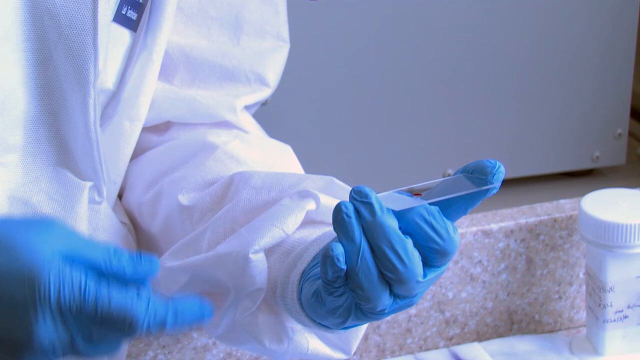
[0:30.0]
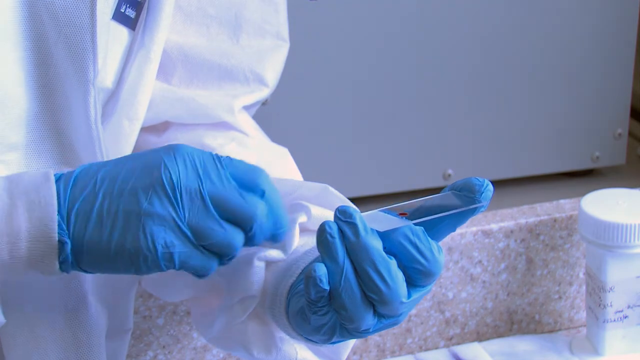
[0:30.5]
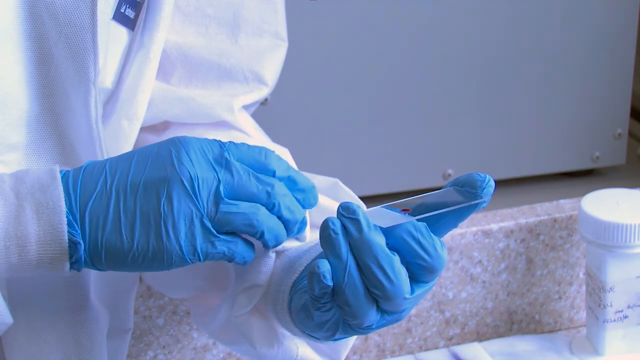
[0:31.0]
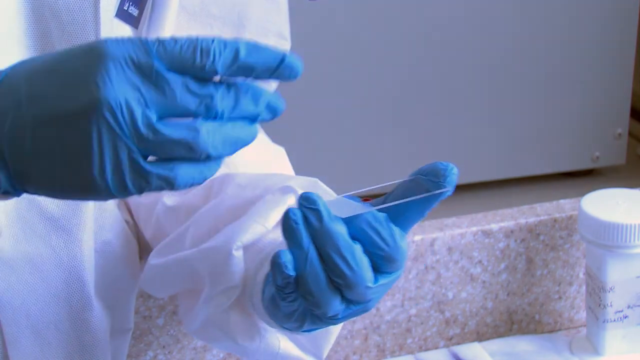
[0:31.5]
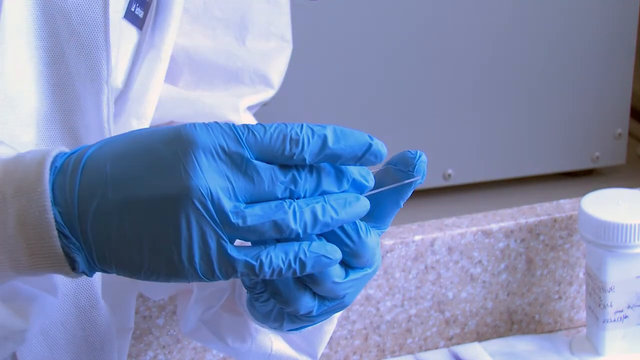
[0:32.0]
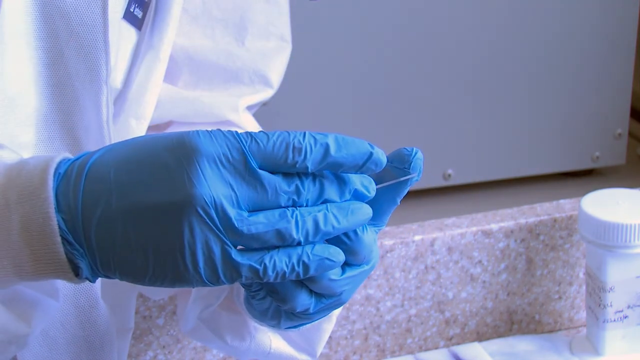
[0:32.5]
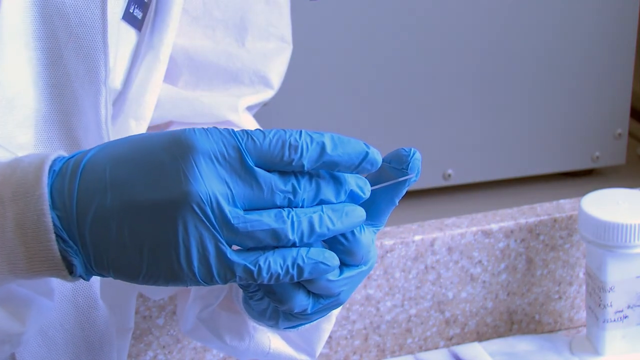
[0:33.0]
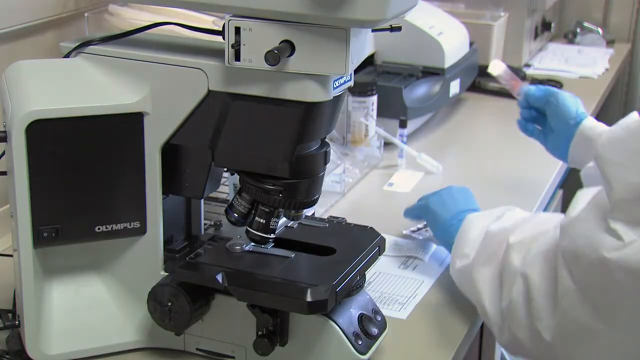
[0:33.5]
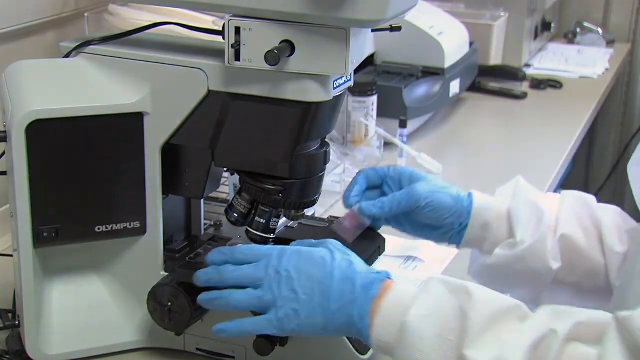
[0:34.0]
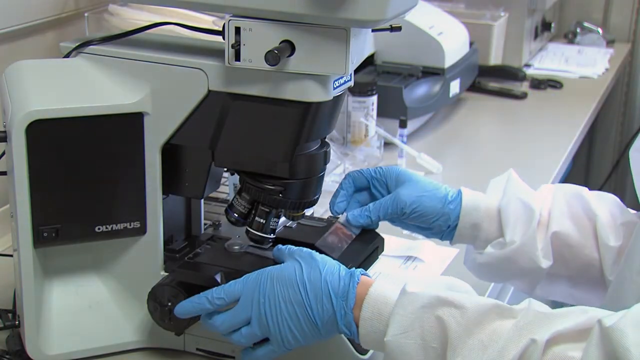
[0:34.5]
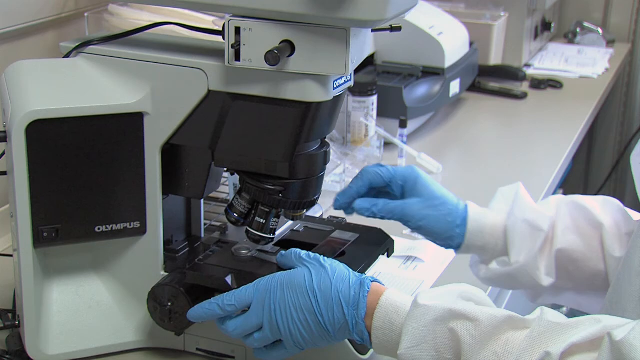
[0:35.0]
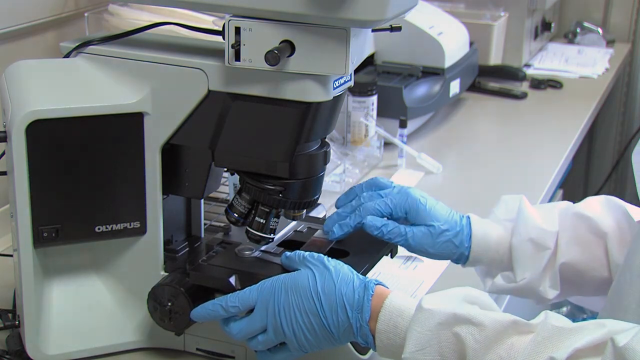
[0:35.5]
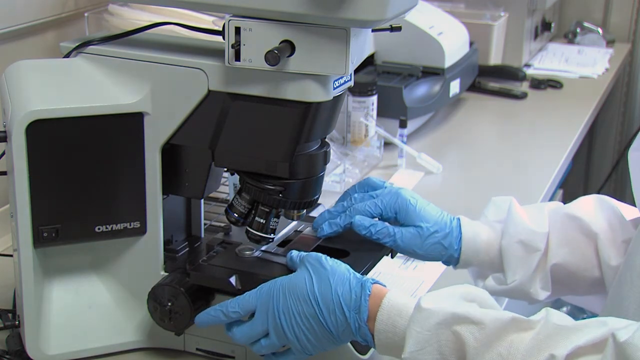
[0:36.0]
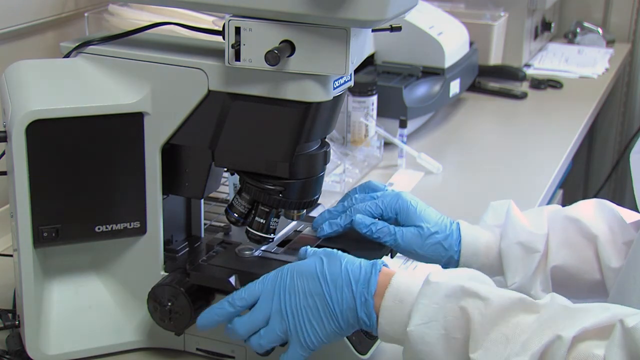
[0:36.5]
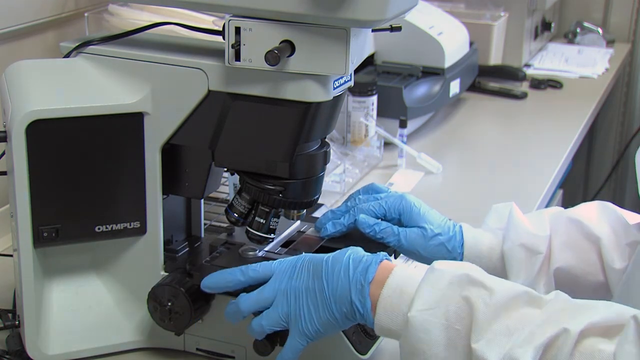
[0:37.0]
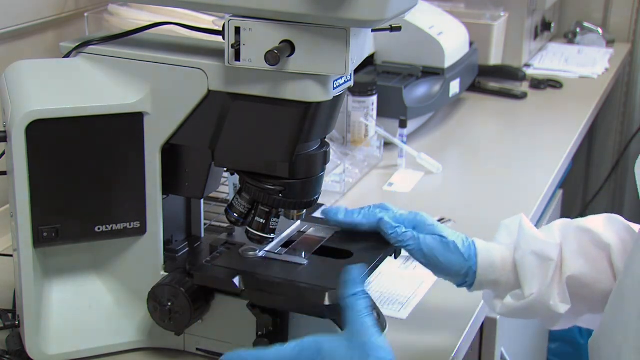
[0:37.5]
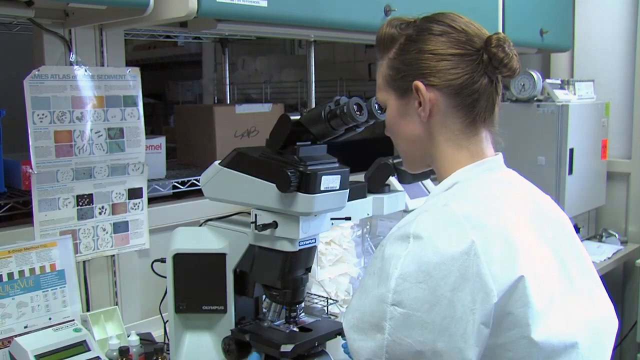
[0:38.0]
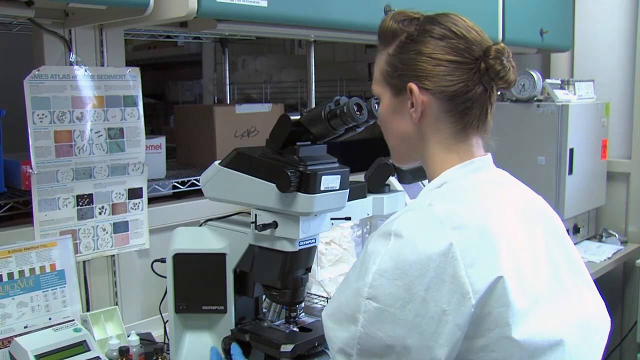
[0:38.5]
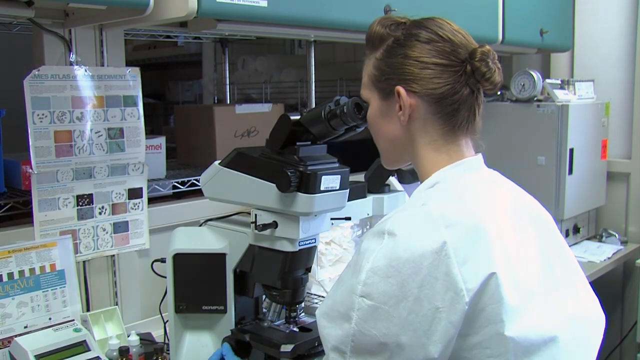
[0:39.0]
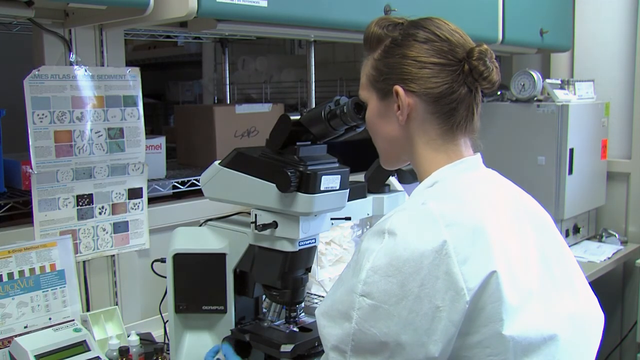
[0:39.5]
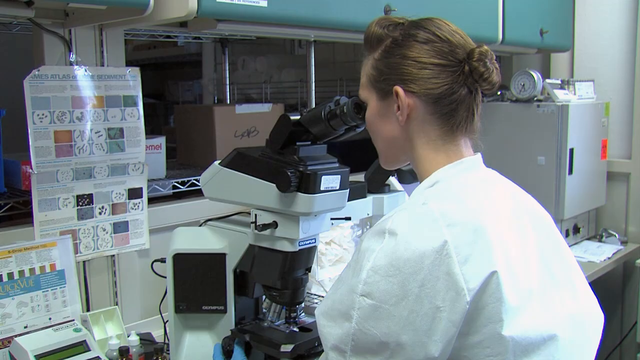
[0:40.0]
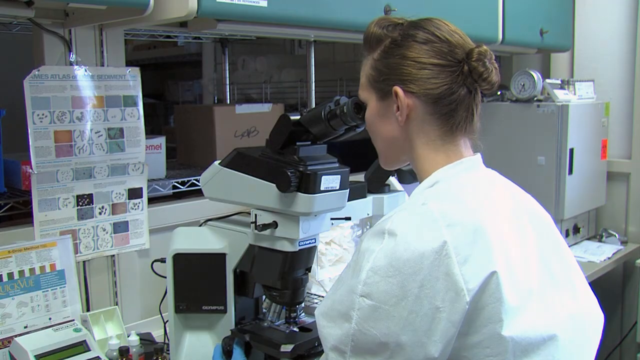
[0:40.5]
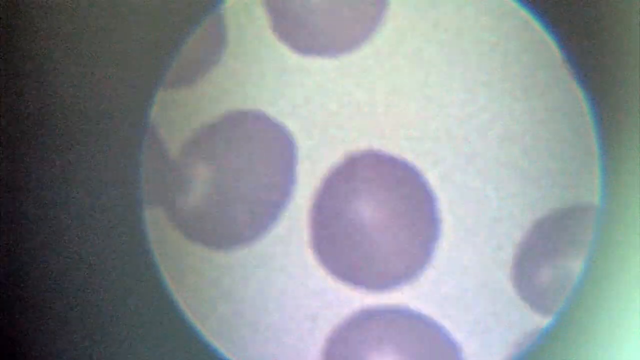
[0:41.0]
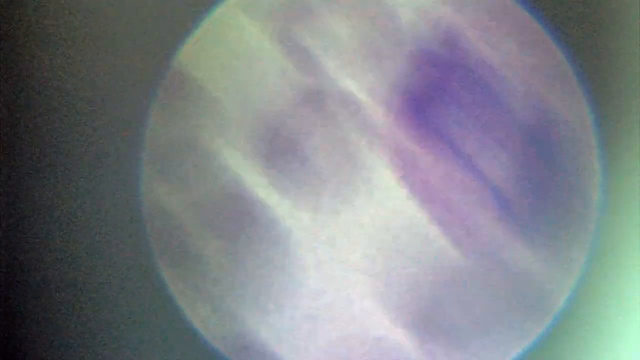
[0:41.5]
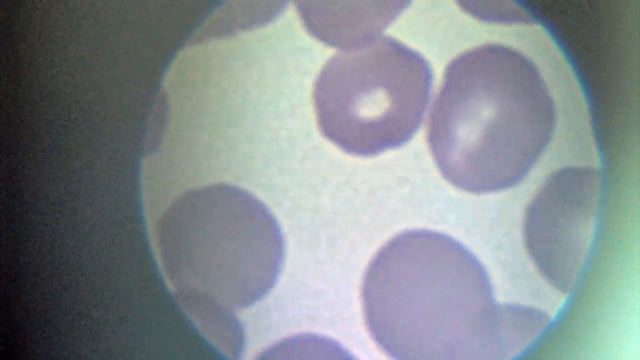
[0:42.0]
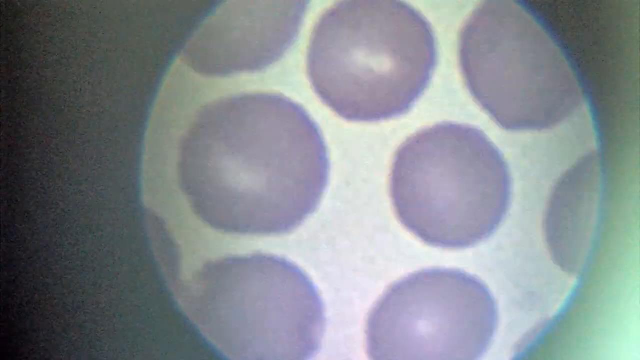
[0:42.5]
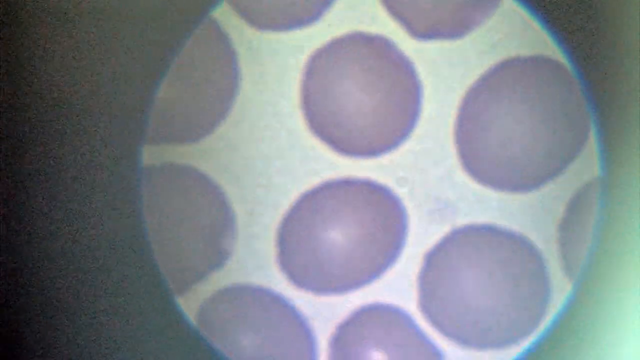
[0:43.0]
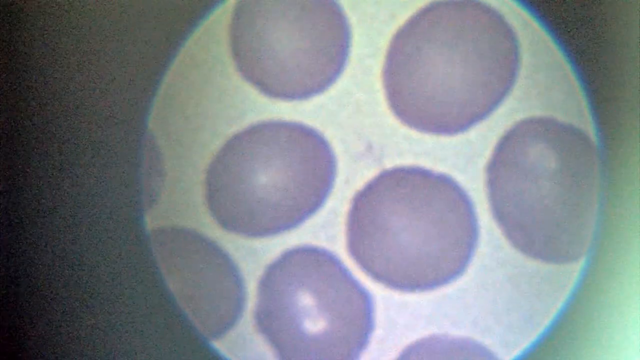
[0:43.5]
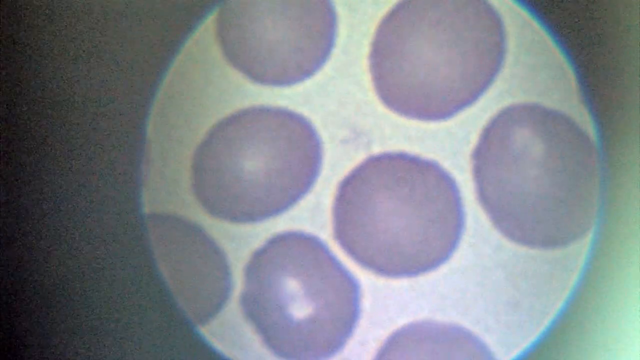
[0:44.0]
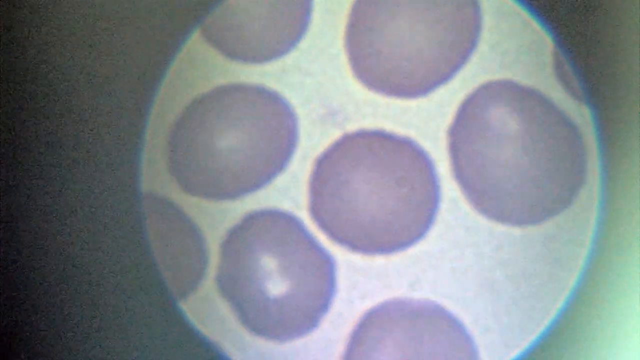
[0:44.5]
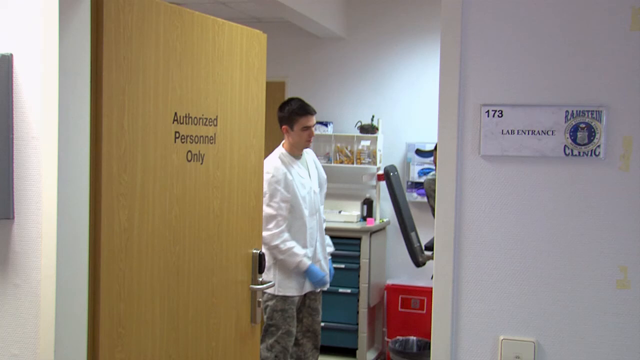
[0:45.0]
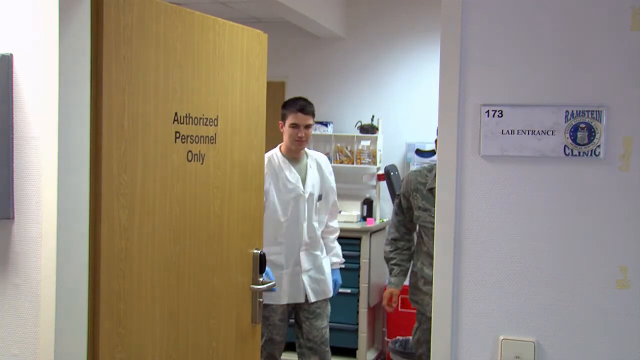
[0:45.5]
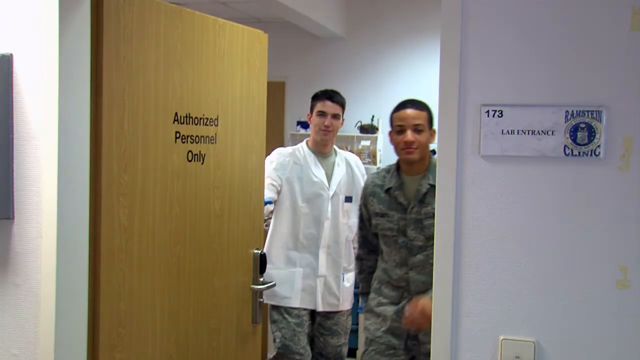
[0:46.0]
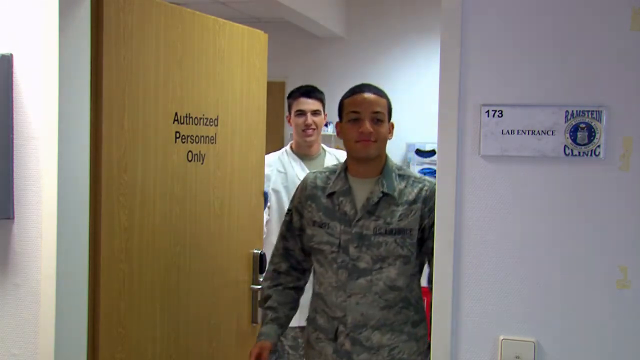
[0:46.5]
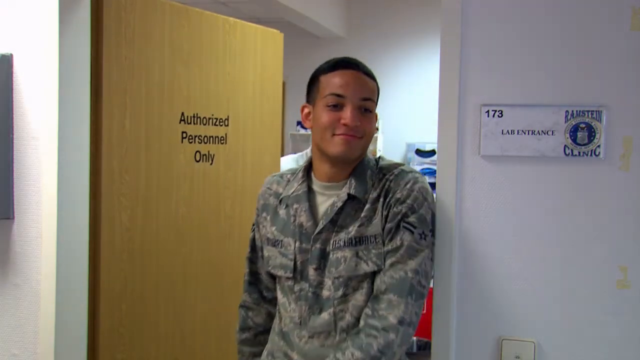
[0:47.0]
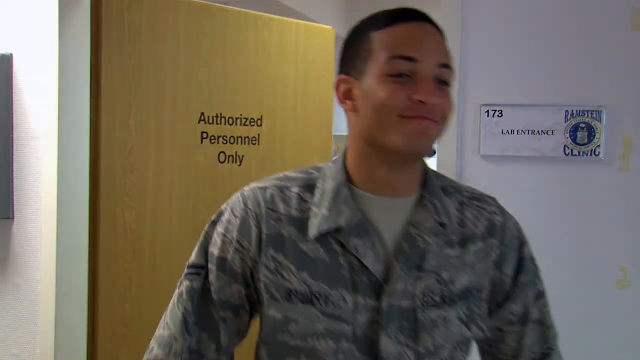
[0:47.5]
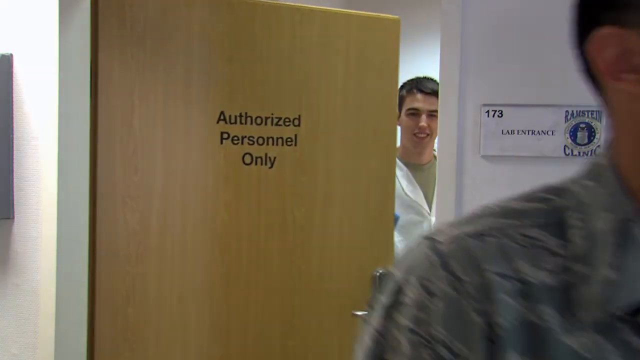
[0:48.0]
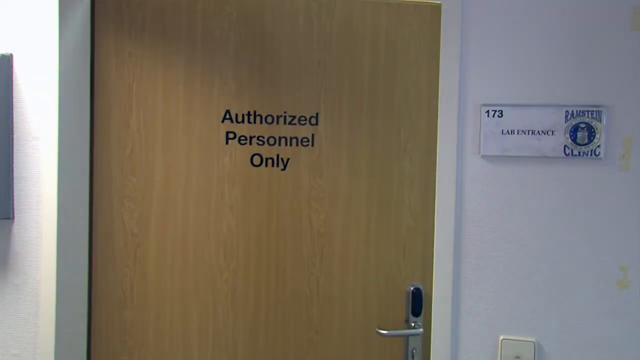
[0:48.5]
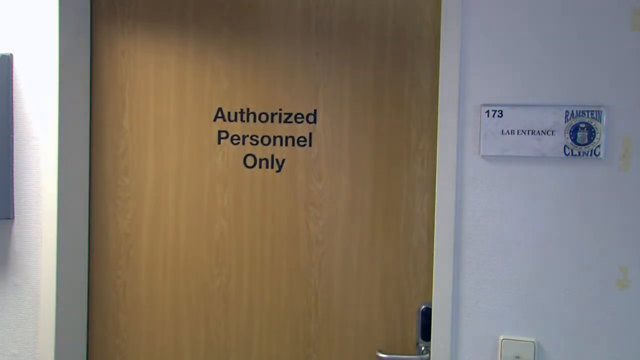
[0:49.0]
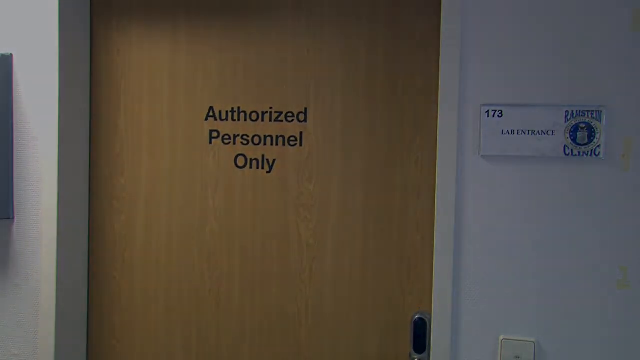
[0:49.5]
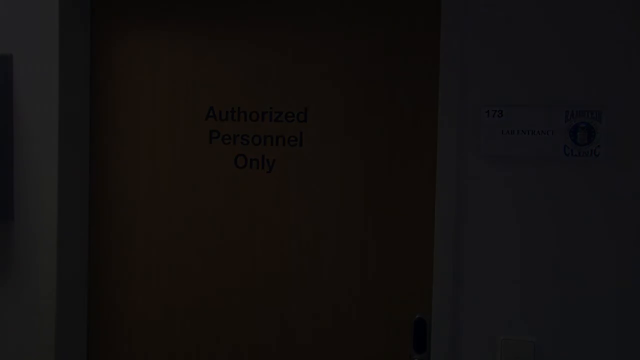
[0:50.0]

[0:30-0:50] The same person keeps the bit of blood on the plate, then uses a sort of expanding screen to squish it so that it spreads across the plate while staying in focus. The plate is put under the microscope on the stage, and the view zooms in on many different blood vessels up close. A couple look kind of thick and solid, while others have some white in the middle. Then the man whose blood was taken walks out with a happy smile on his face.